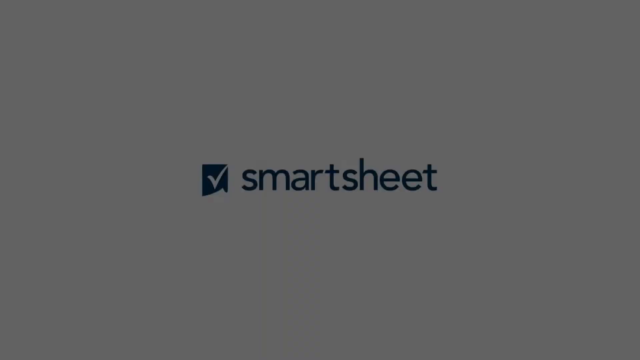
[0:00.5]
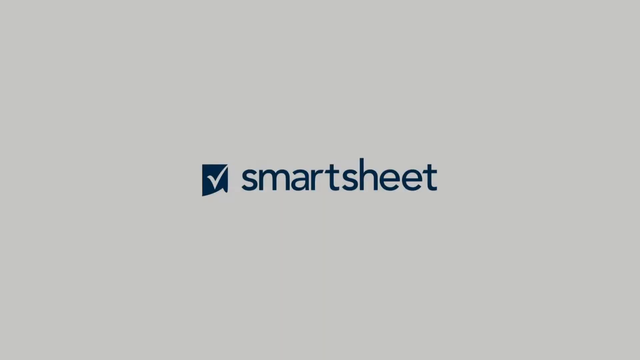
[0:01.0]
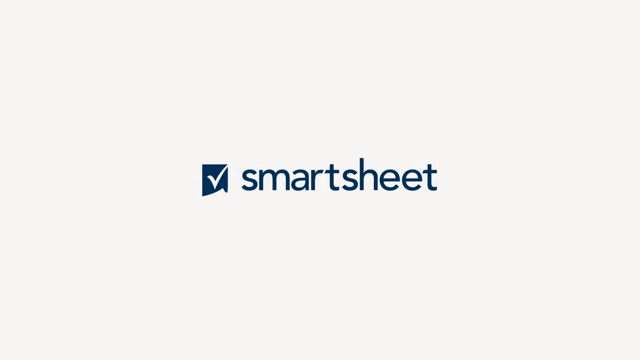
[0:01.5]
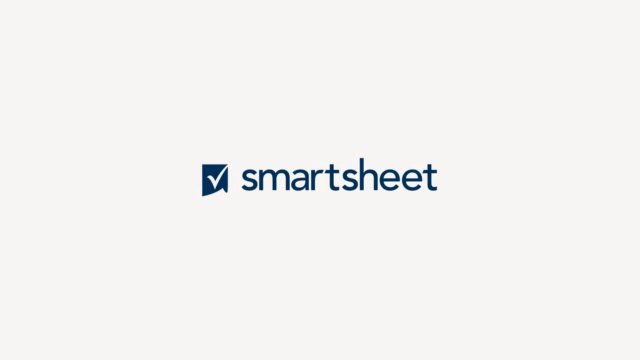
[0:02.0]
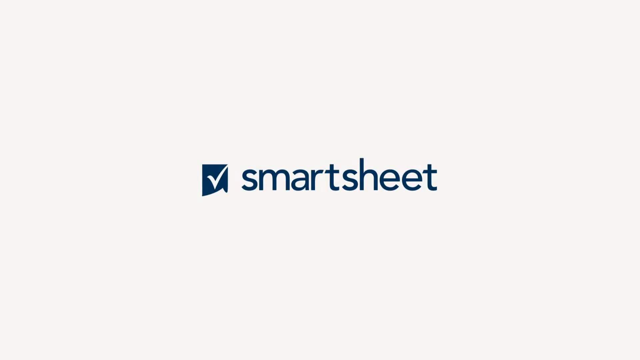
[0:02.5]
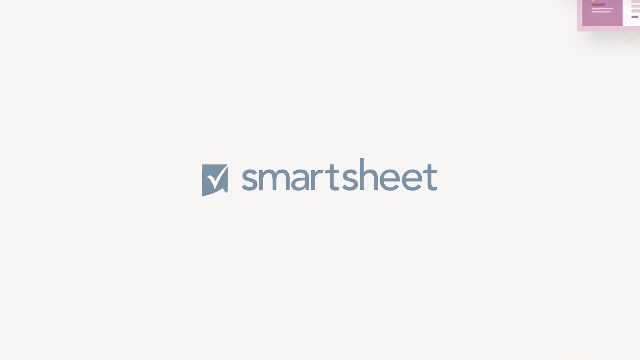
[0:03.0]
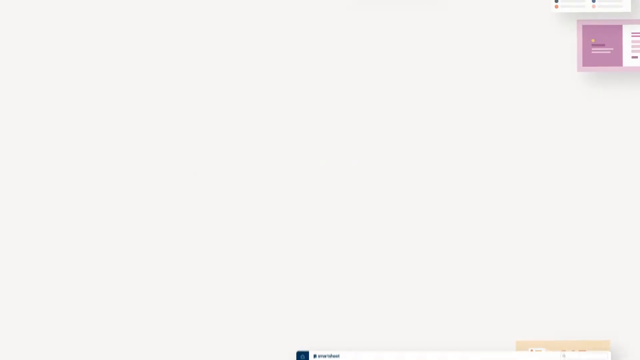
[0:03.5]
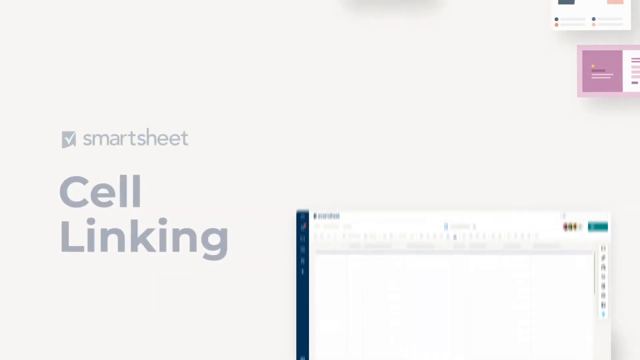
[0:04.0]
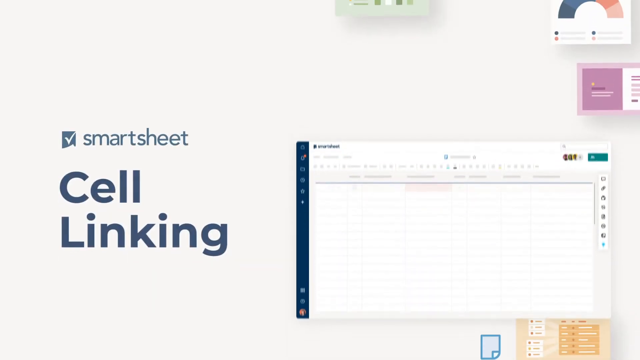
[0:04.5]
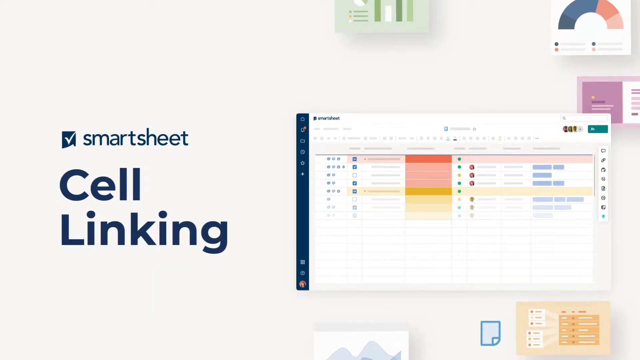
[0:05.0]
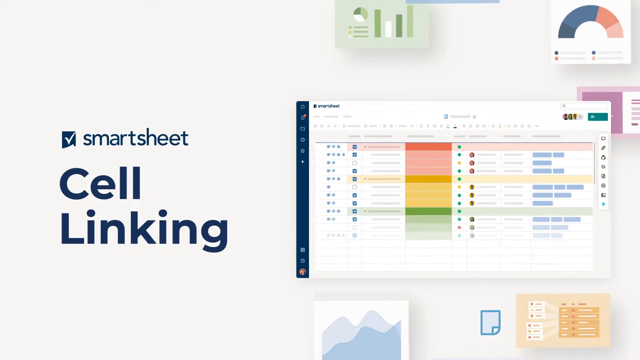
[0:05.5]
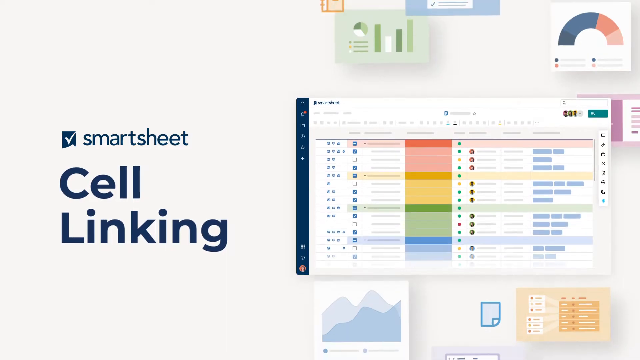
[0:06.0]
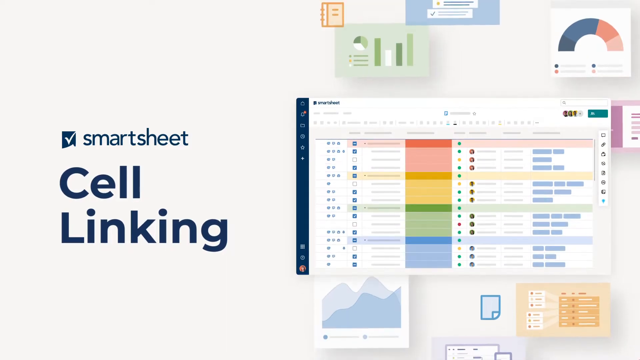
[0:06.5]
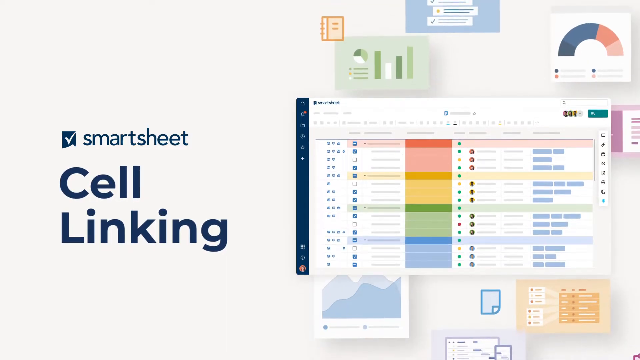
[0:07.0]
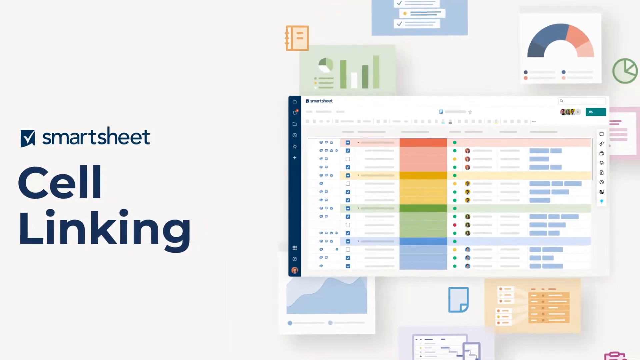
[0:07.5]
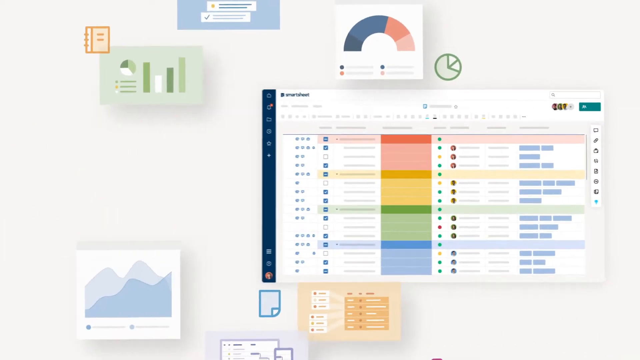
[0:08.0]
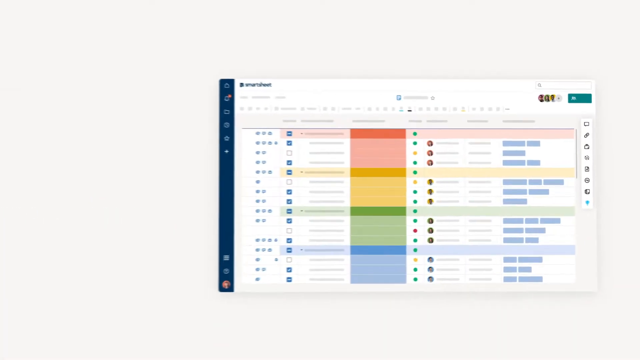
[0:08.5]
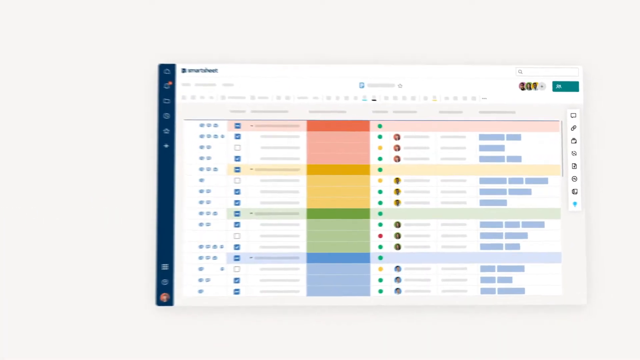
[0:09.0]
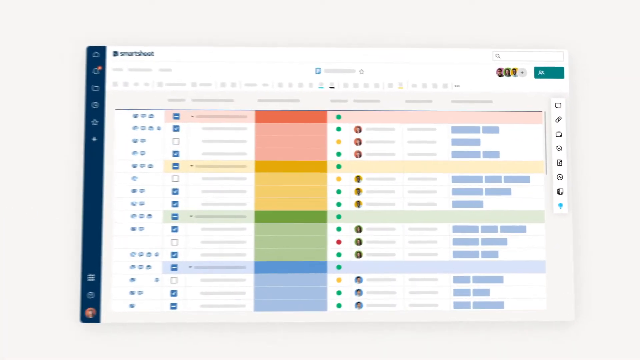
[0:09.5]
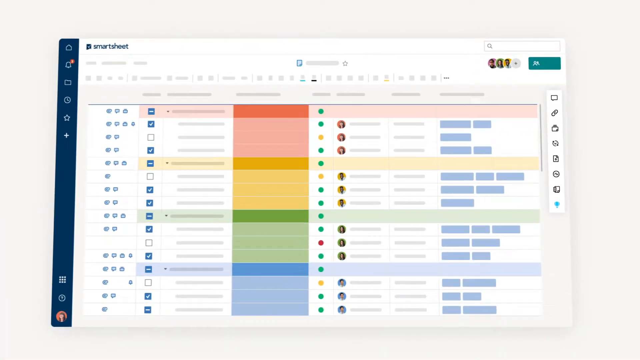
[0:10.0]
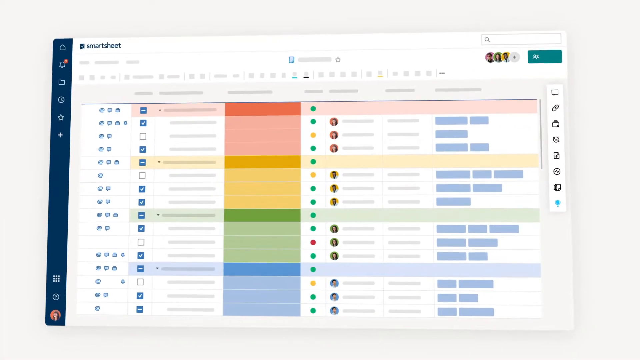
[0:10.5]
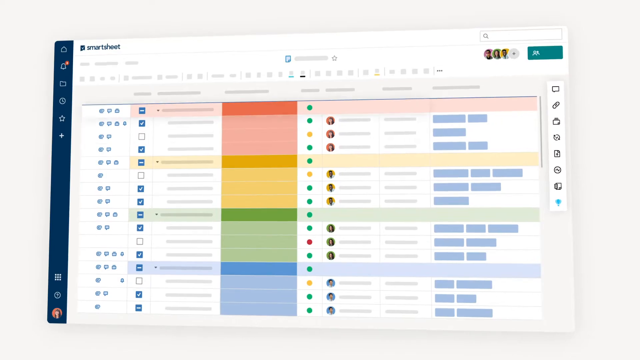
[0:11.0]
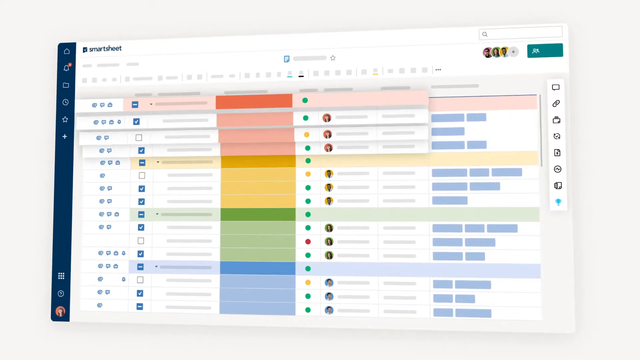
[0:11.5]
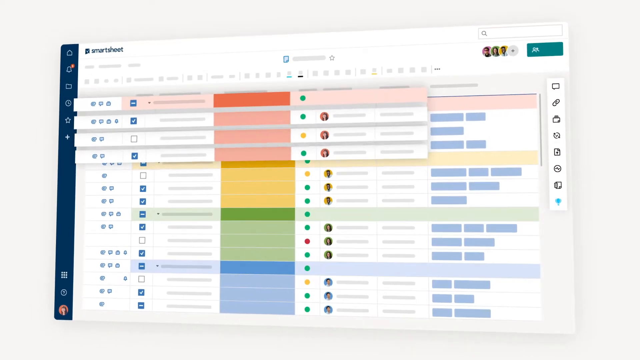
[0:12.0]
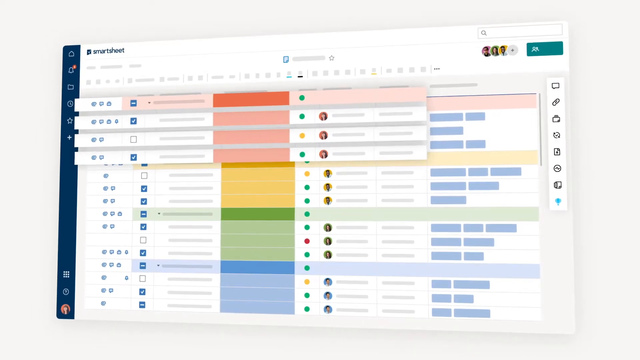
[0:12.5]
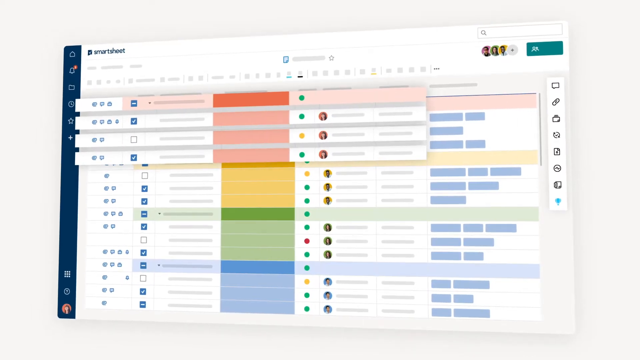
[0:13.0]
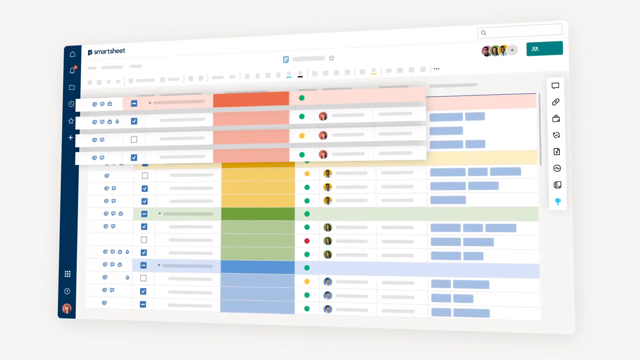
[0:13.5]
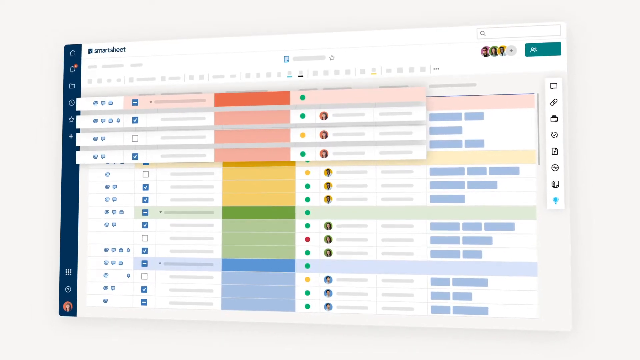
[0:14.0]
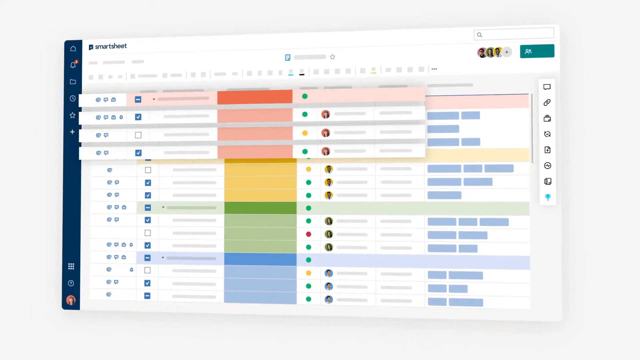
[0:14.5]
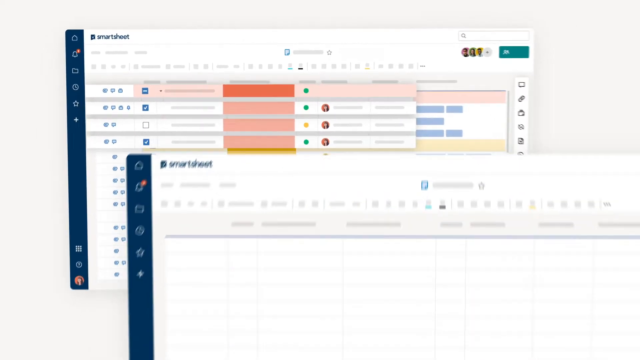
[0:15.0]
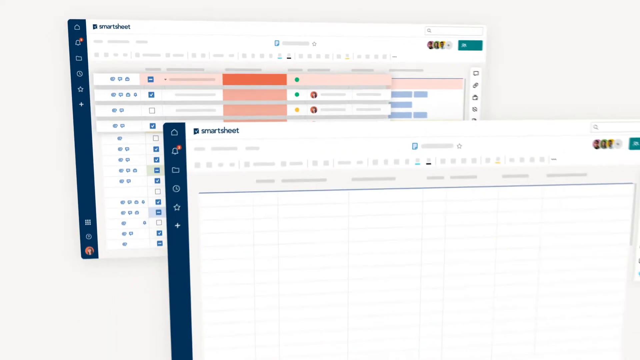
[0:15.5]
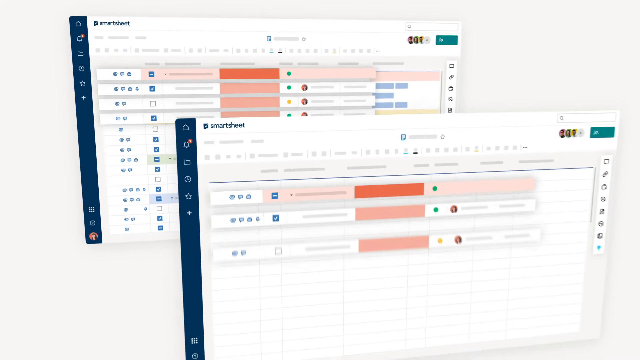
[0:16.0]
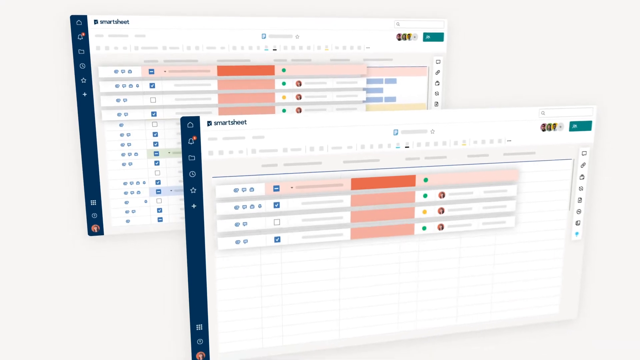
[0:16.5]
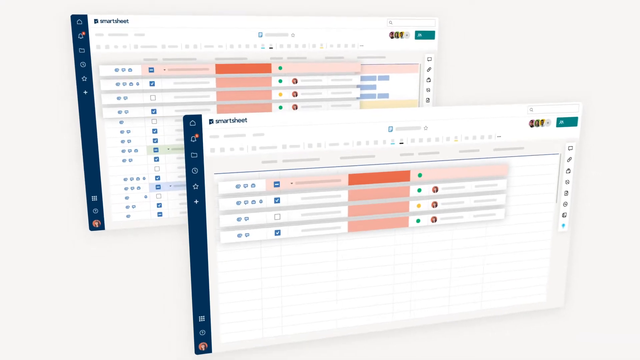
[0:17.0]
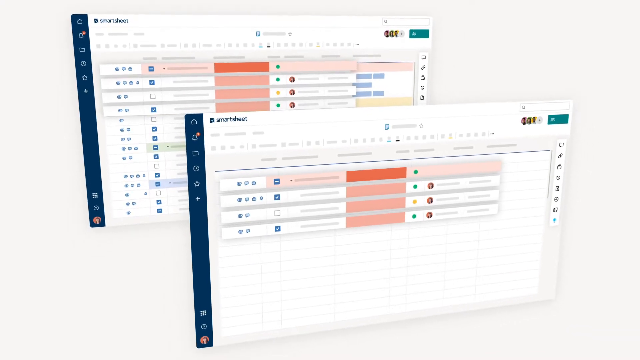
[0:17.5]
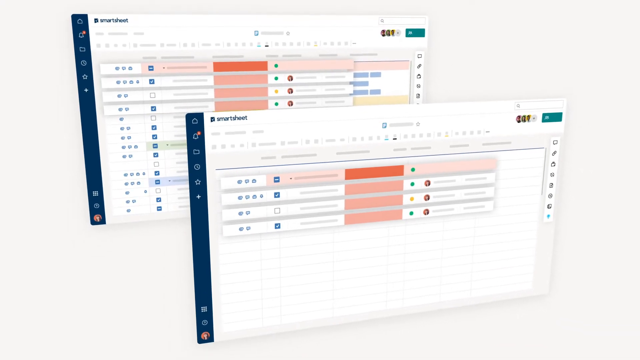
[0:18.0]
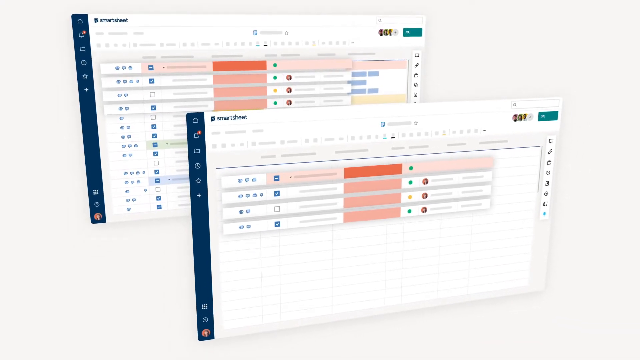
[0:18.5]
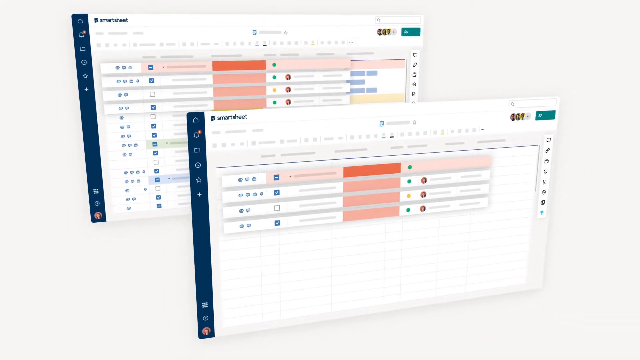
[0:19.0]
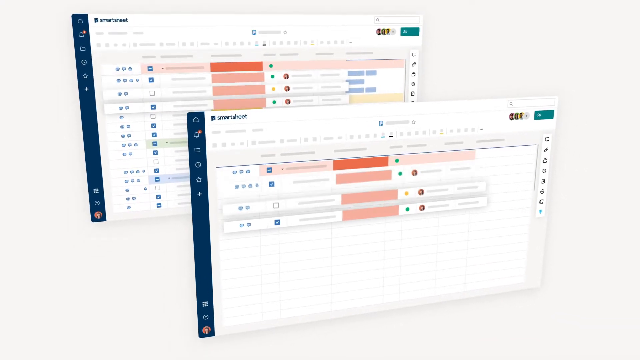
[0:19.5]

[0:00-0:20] The video appears to involve Smartsheet and something about cell linking, seemingly related to computers or data sheets. A page is shown with "March" at the top, with other people connected, different colors, check marks and check boxes; the type of data on it is unclear. Another Smartsheet page then comes up, with pink boxes and blue check marks. Everything on it is color-coded.